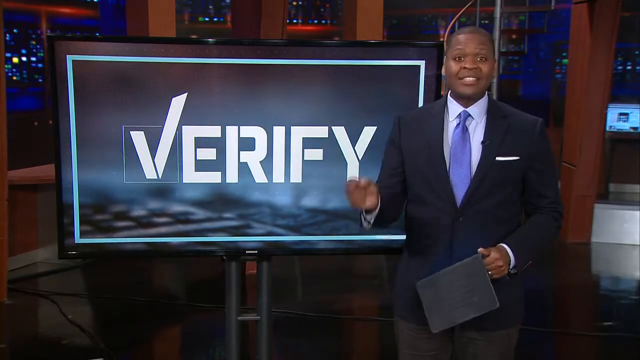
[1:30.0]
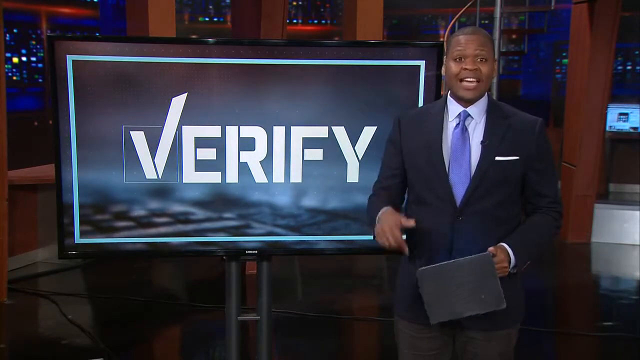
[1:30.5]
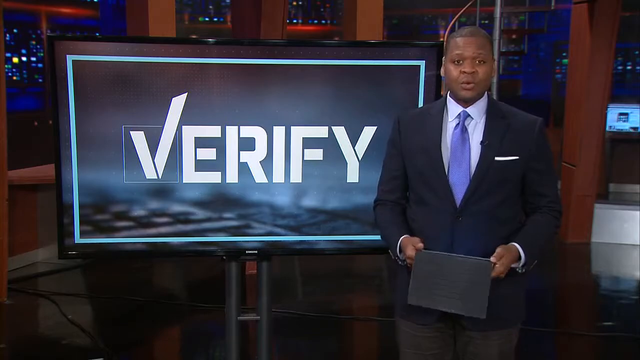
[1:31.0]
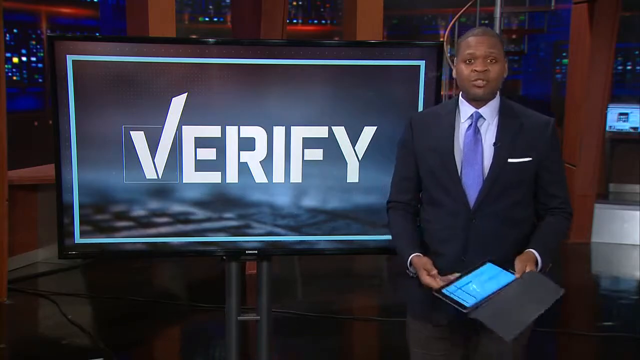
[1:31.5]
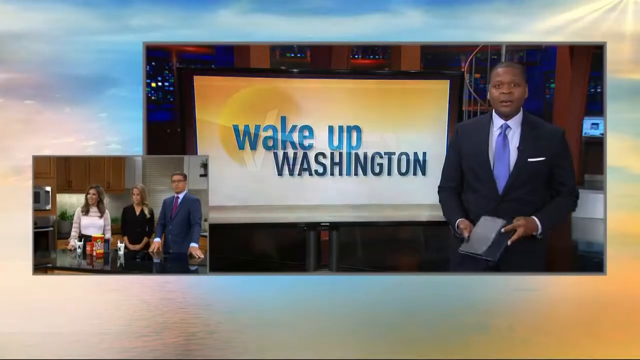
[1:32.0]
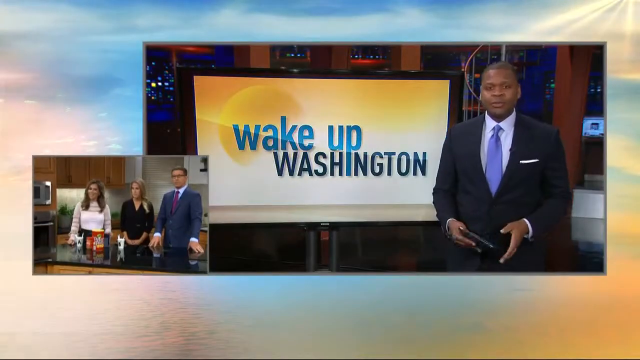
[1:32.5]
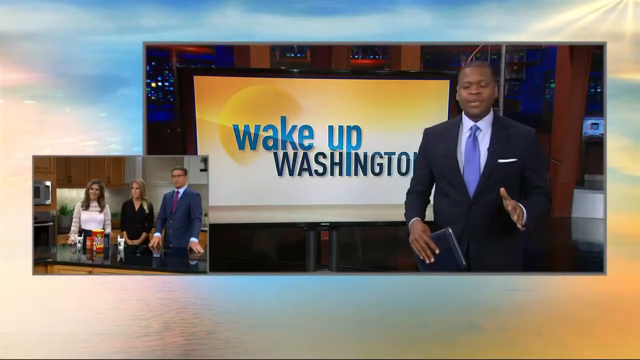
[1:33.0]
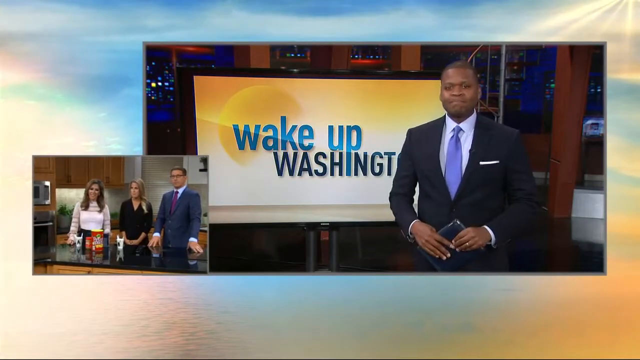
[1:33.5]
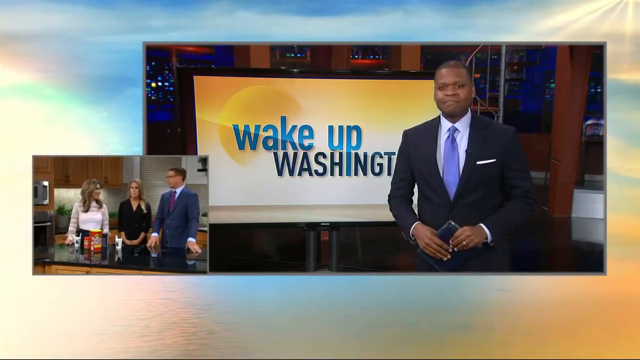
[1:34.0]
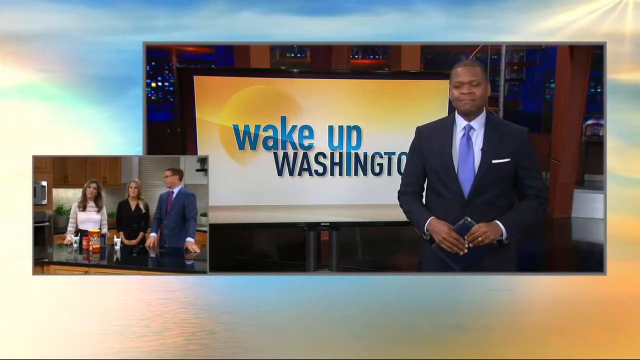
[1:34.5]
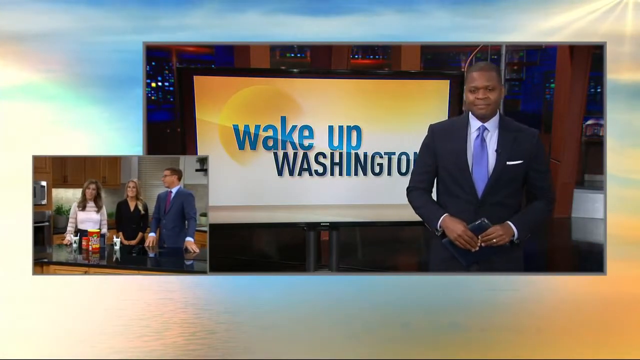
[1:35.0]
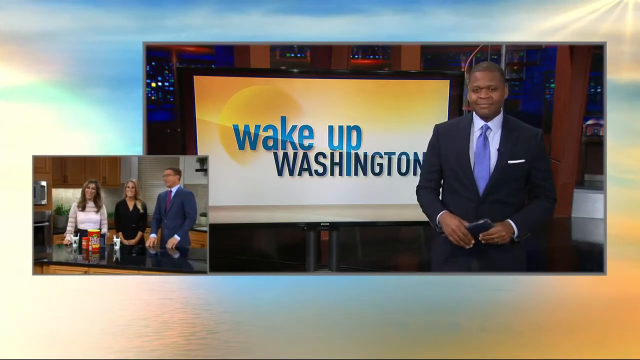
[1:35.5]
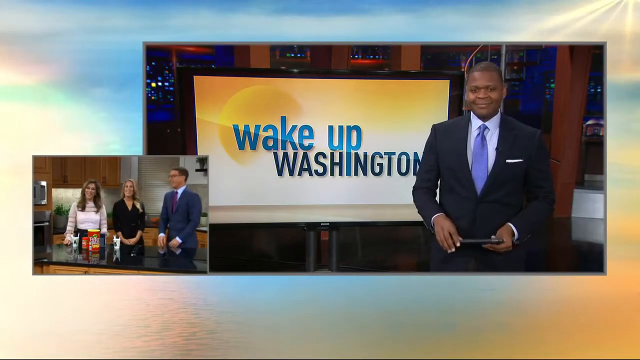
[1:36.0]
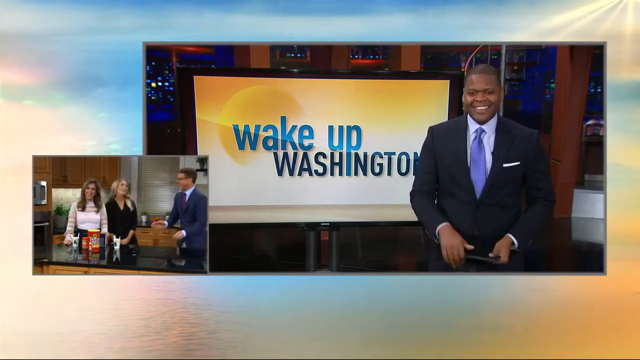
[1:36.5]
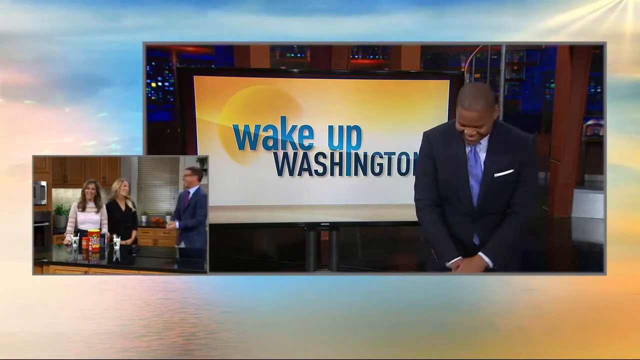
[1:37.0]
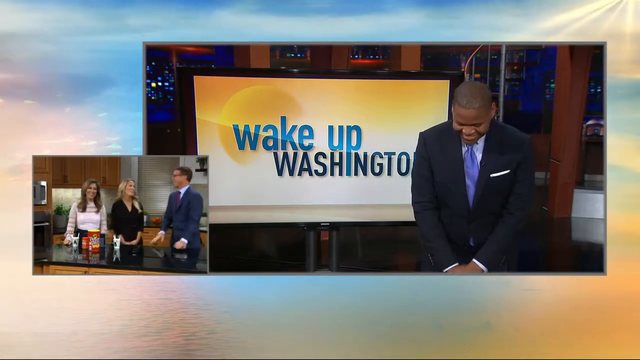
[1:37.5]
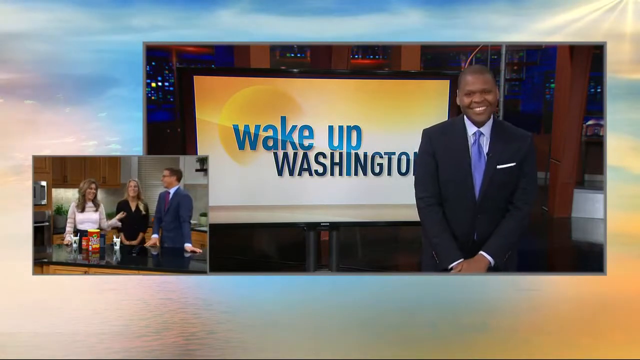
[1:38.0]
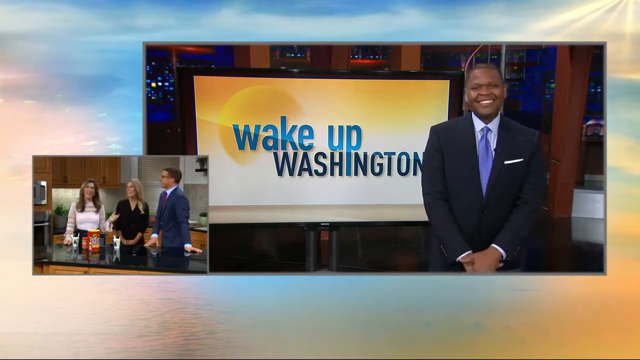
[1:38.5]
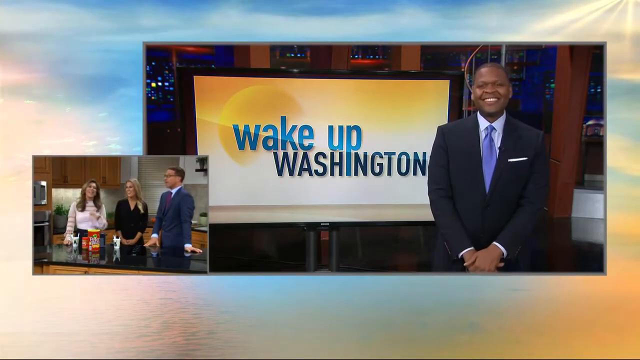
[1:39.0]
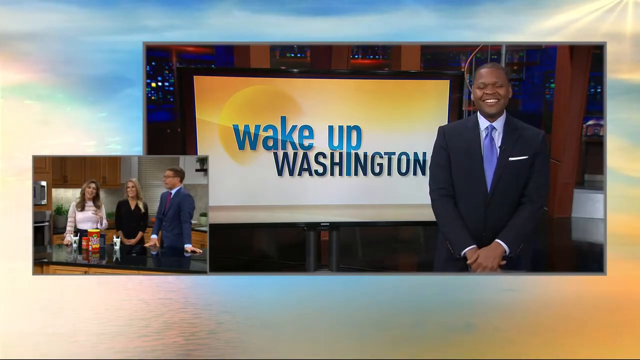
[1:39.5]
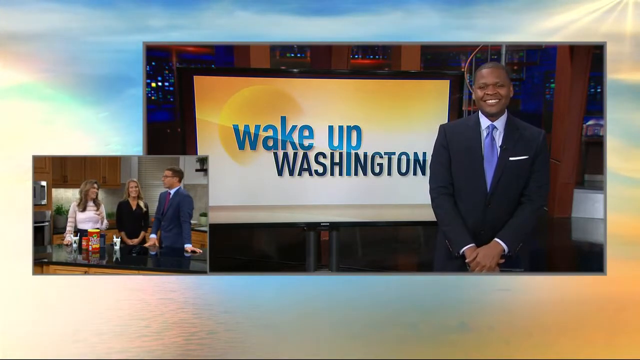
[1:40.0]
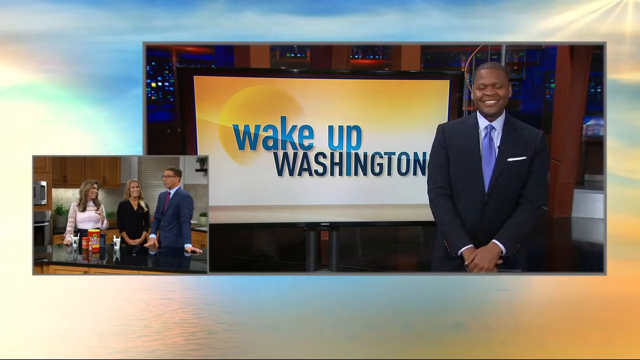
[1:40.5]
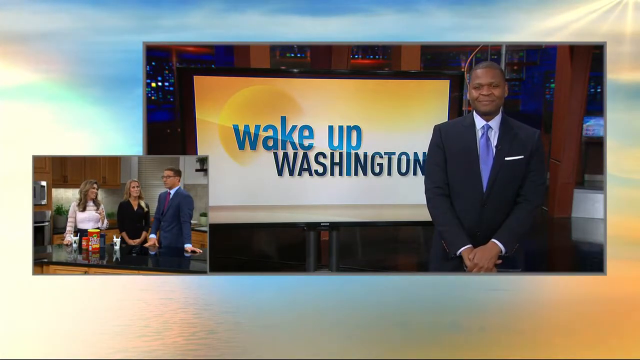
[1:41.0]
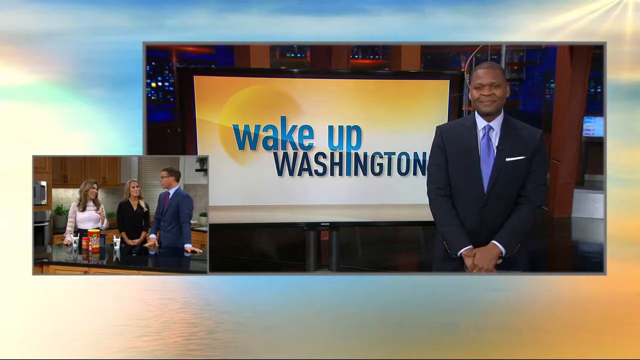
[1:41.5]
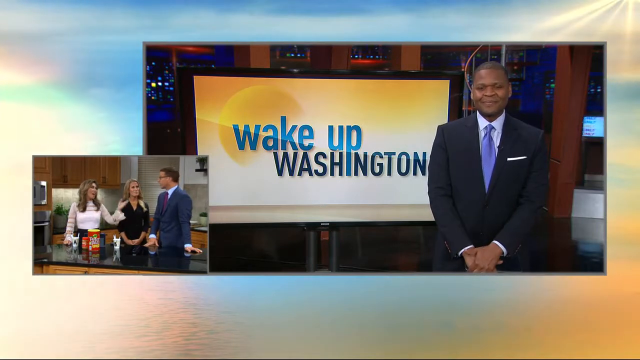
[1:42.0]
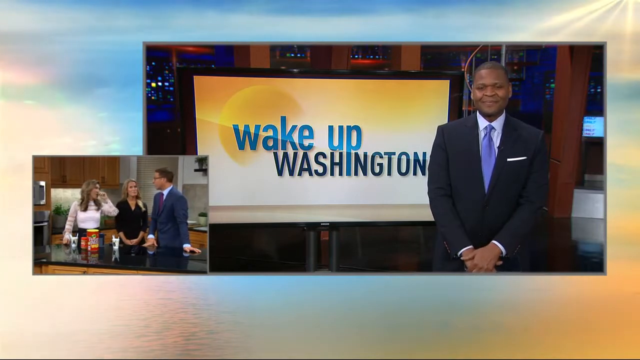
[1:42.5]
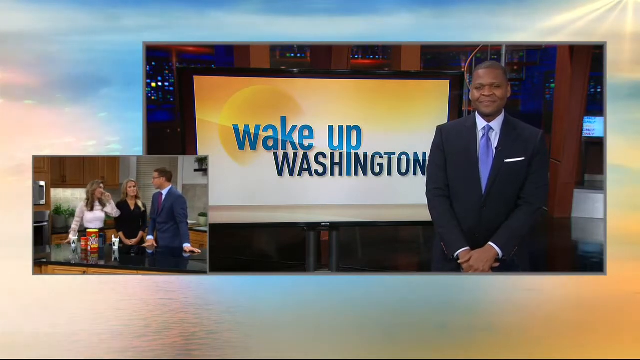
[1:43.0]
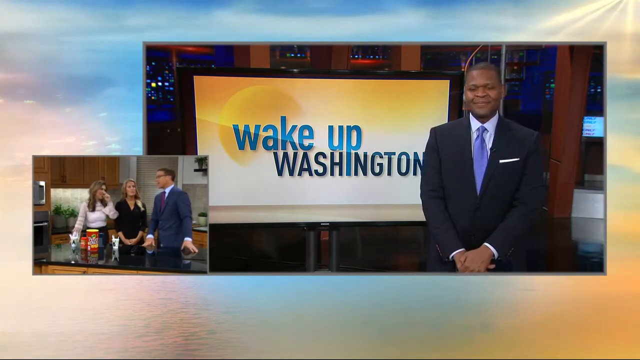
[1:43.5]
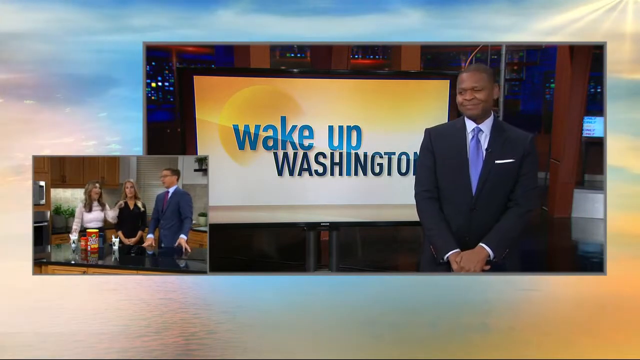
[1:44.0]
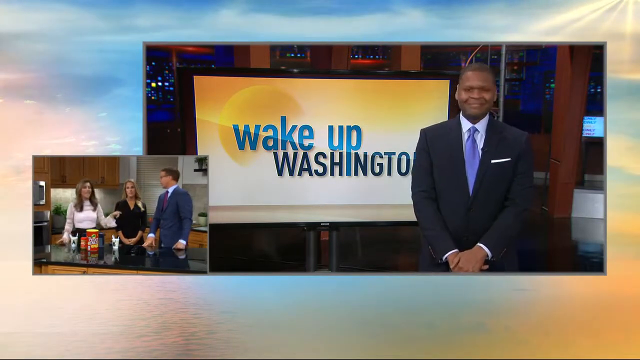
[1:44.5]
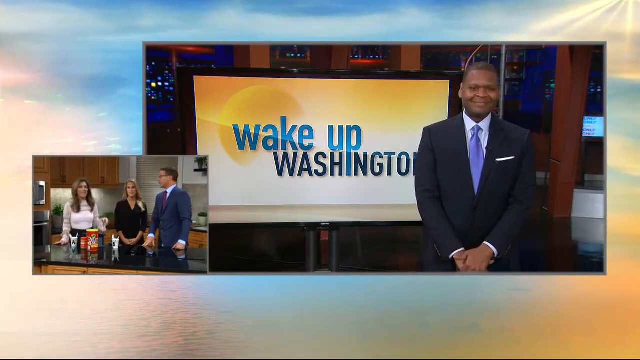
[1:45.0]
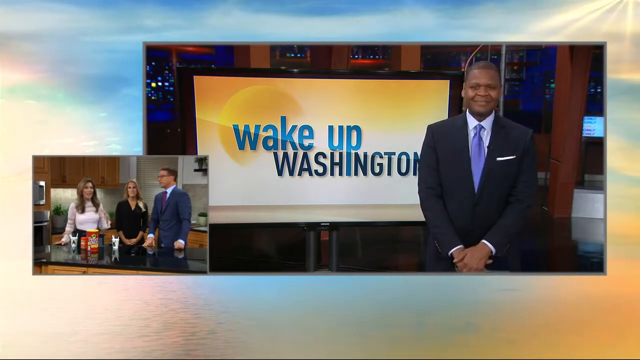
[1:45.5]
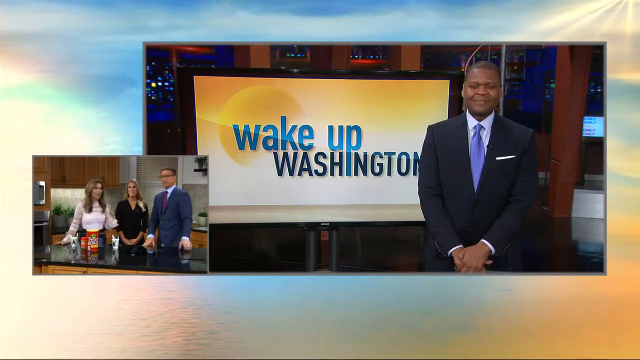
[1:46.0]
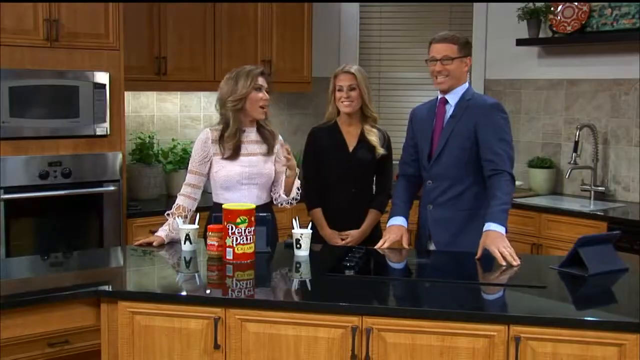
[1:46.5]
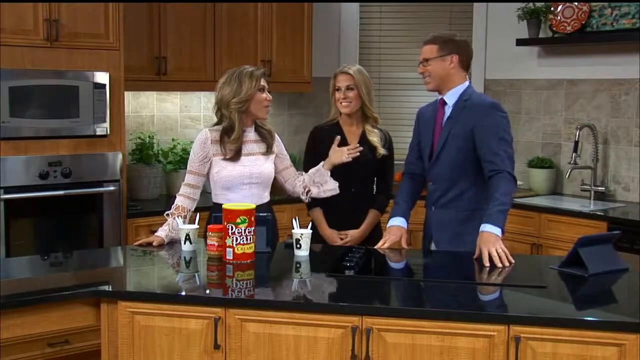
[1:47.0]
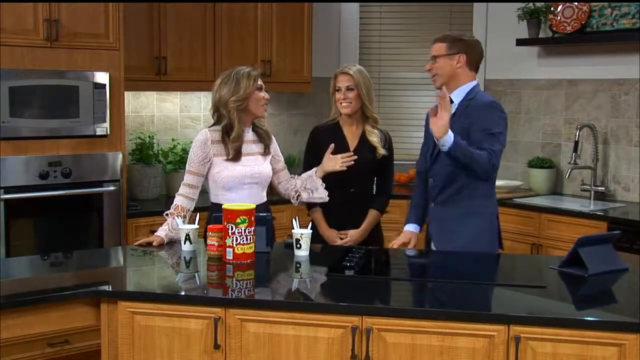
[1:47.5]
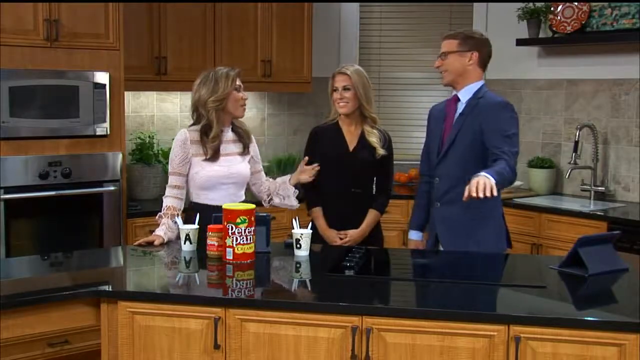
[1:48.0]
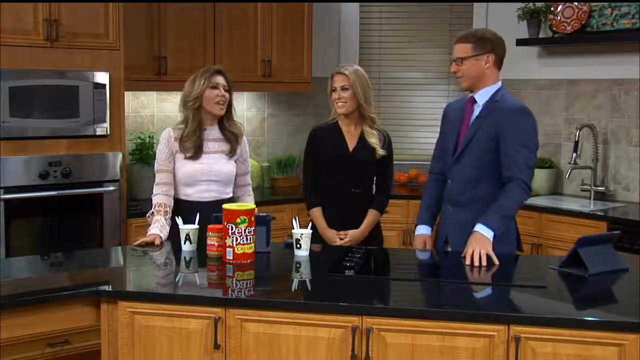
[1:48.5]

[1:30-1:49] The video goes back to the man in the black suit, blue shirt and blue tie. He has his tablet open for a minute and appears to be directing the camera and viewers to another segment. An image comes up of three people standing in front of a counter. A woman in a white long-sleeved shirt has like shoulder-length hair. Next to her is a woman in a black shirt or dress with blonde hair kind of in a ponytail off to her shoulder. A man standing beside them wears glasses, a blue suit, a blue undershirt and a kind of burgundy tie, with his hands on the counter. They have some type of food items in front of them, and it looks like a cooking segment. They are in a kitchen with brown cabinets, a microwave on the wall, an oven, a sink and windows behind them; the countertop is kind of a black marble color. They seem to say something funny to the newscaster, who kind of doubles over in laughter, and they appear to be introducing viewers to their segment. In front of them are a huge jar of peanut butter, apparently some cups and spoons, and what looks like a store brand of peanut butter, apparently for a taste test.